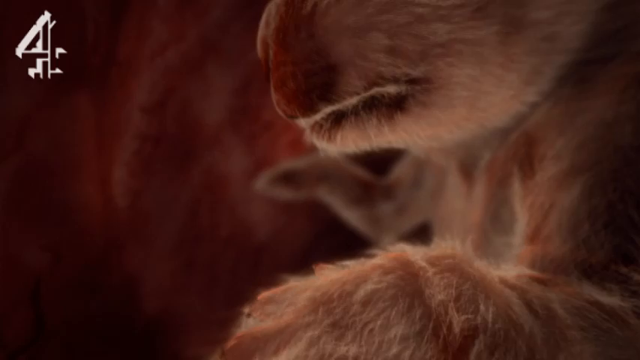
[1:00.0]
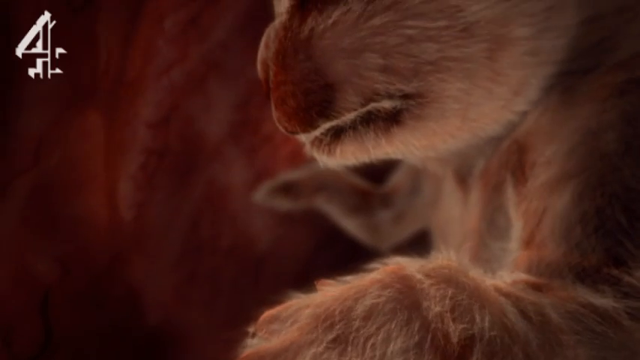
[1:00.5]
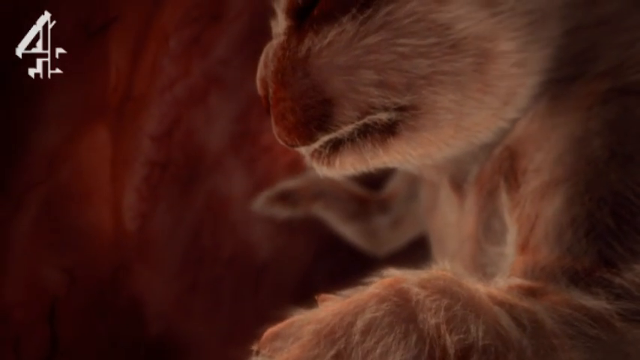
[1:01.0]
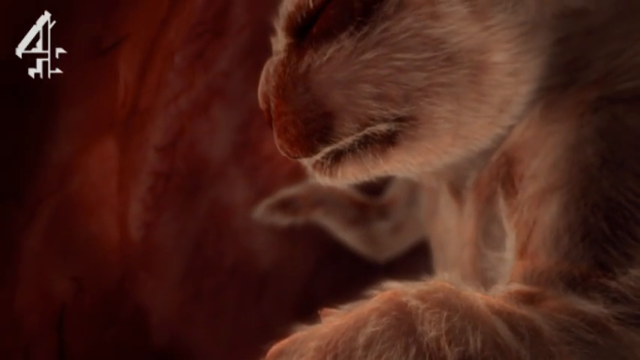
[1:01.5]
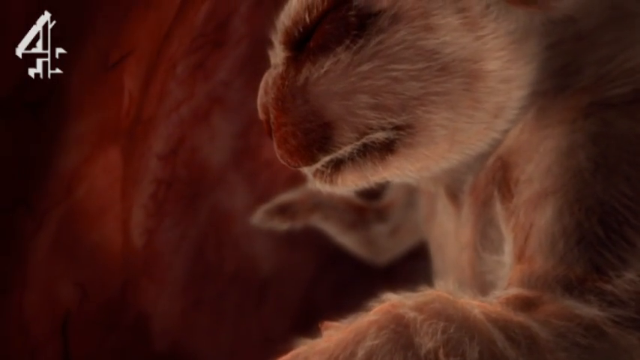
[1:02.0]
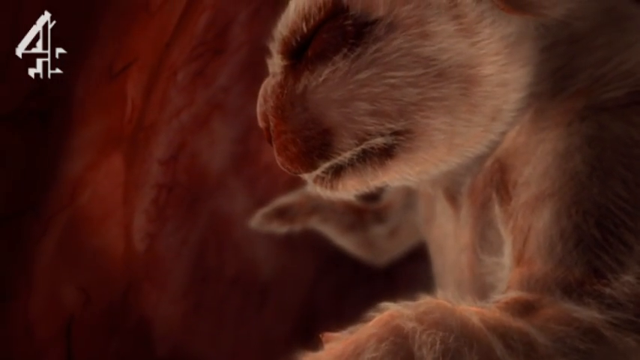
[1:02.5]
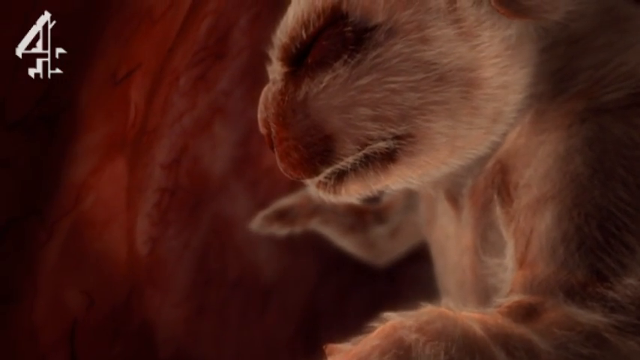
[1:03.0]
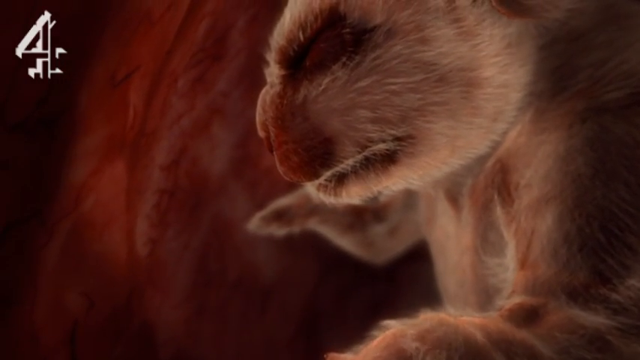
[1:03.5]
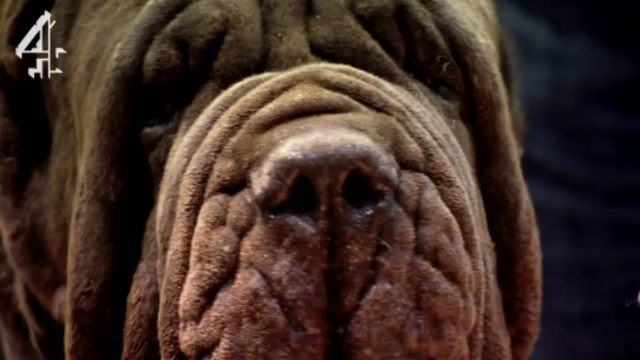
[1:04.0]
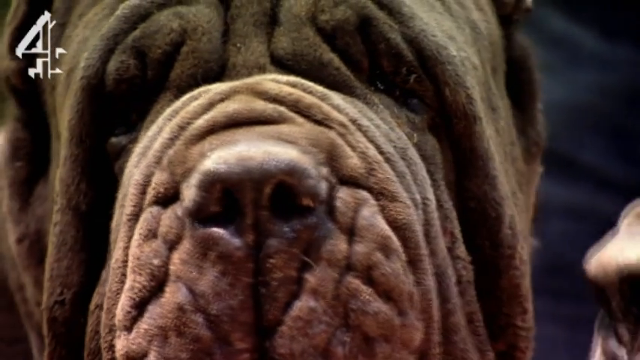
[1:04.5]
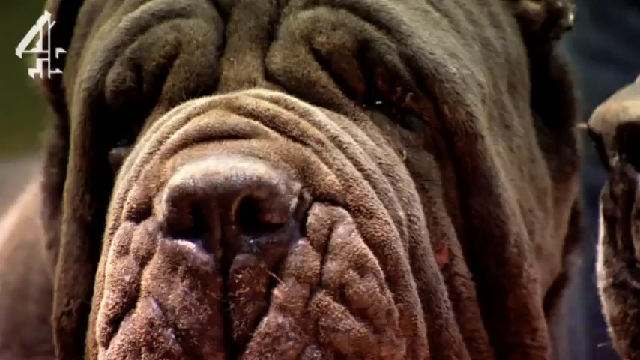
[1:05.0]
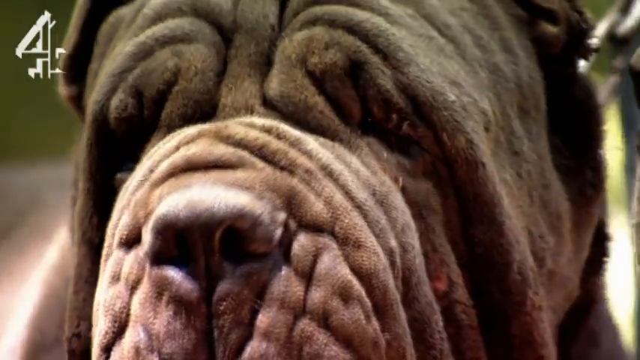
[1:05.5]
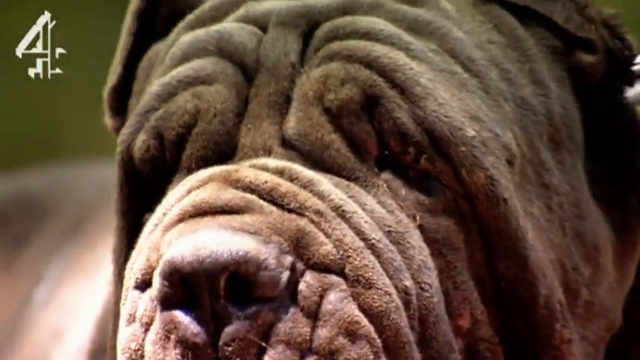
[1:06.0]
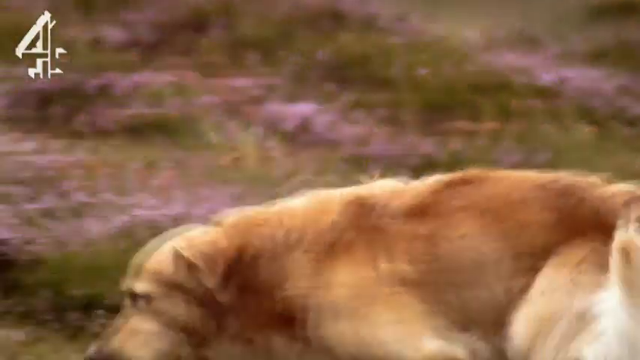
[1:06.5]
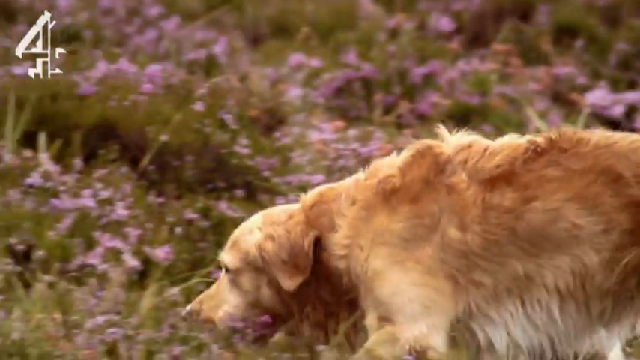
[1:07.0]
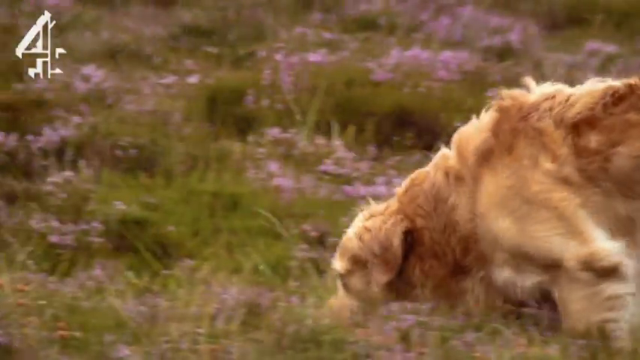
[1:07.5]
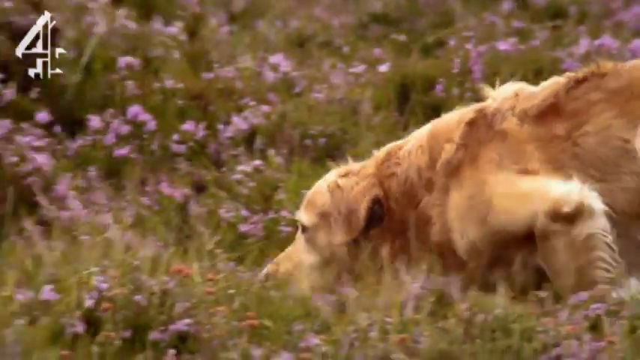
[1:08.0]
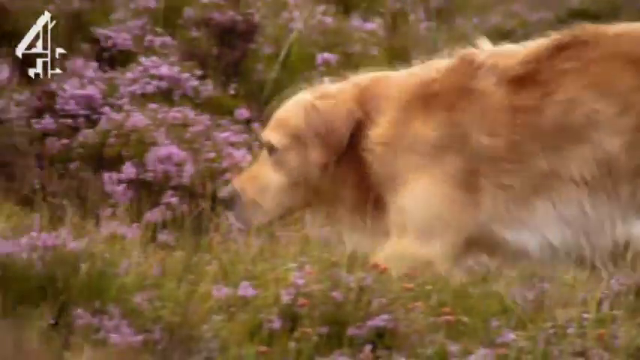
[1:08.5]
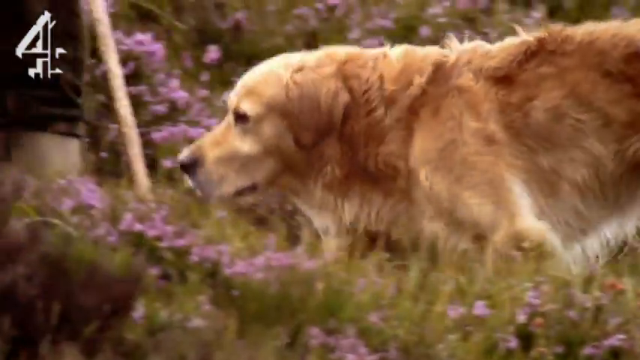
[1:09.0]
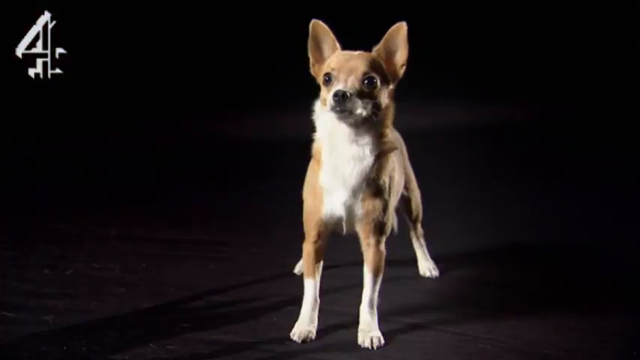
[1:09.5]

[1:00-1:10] The object is on the right side of the screen. It looks furry, with fur on it, and is not very formed. It possibly has the shaping of a flatter snout and nose, and it has white hair all over its face and body. A close-up of the object faces toward the viewer; it is light pink maroon on a dark maroon, blackish background. Multiple animals then pop up. A large animal that looks like a dog moves from left to right. The left side of its face has a lot of ridges along the snout and above the eyes, and its black nose faces toward the viewer. Then an animal comes from the right side of the screen, moving with its front legs one in front of the other; it has fur all over it and is in a field of greenery with light purple flowers. A small dog with short legs, a white chest and brown hair looks toward the camera against a dark black background.